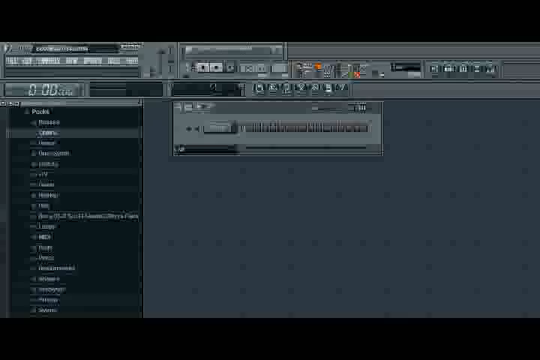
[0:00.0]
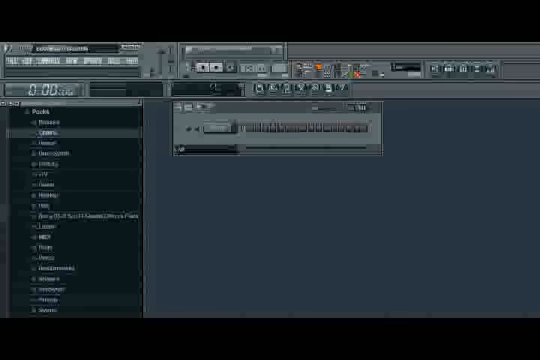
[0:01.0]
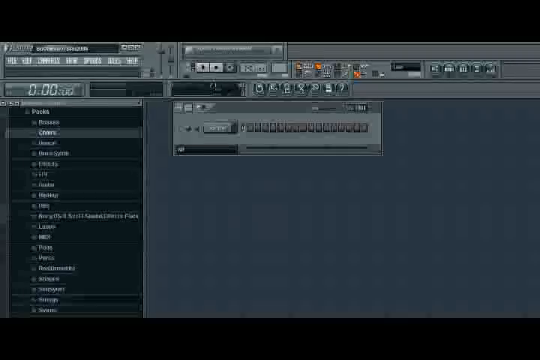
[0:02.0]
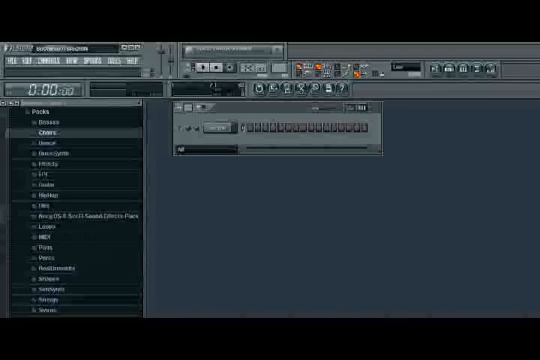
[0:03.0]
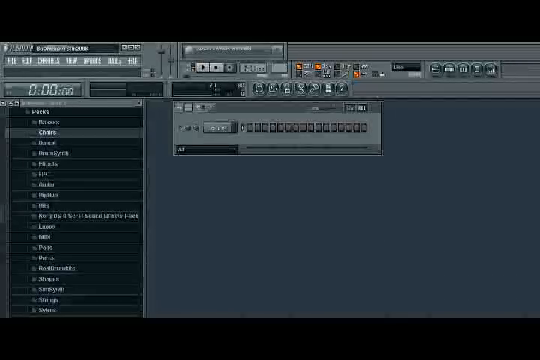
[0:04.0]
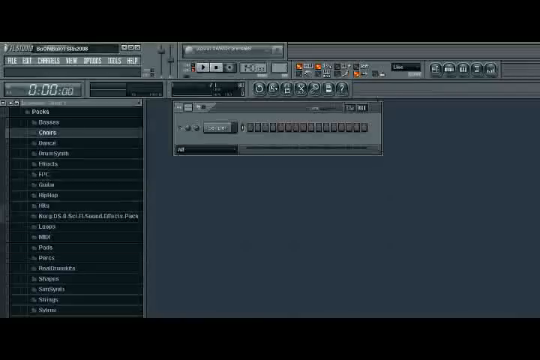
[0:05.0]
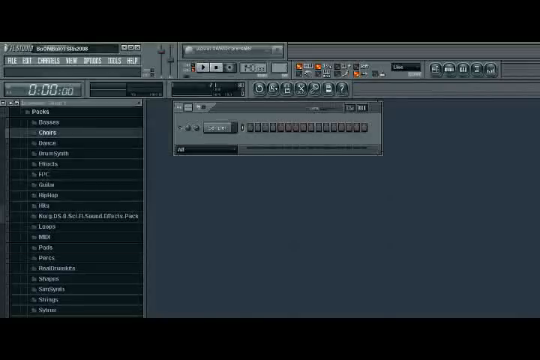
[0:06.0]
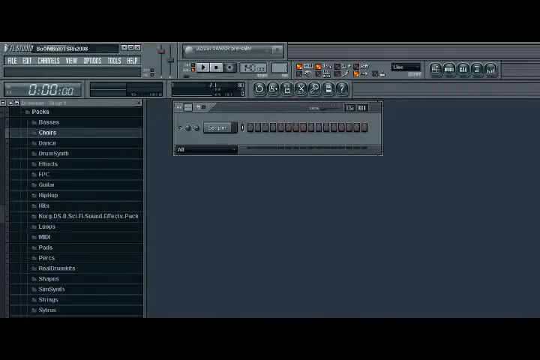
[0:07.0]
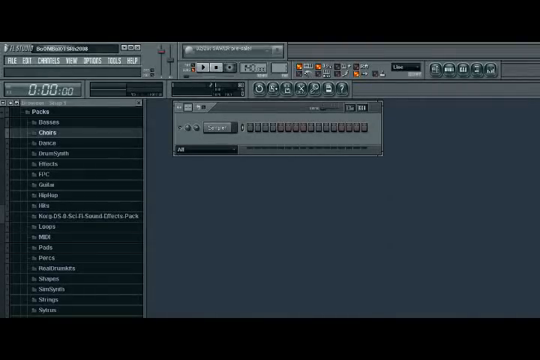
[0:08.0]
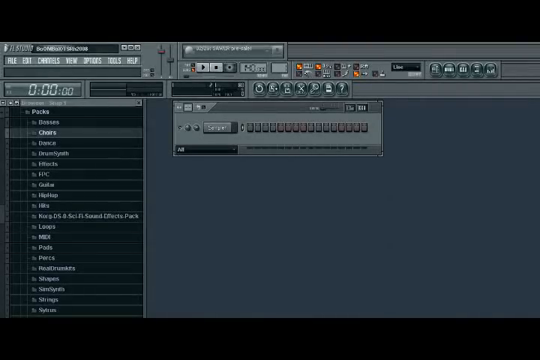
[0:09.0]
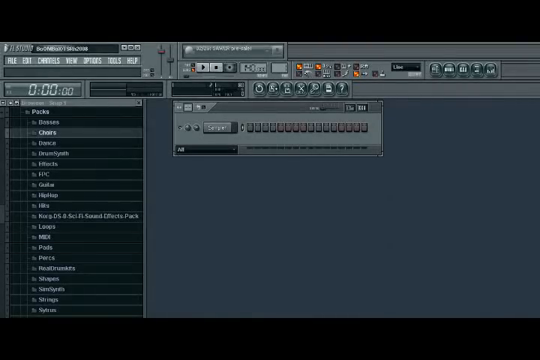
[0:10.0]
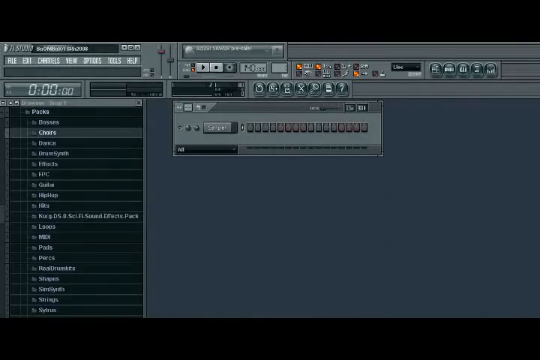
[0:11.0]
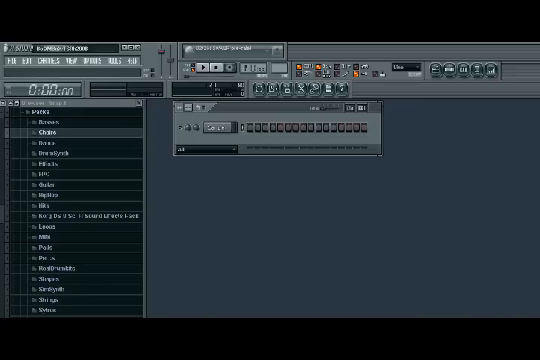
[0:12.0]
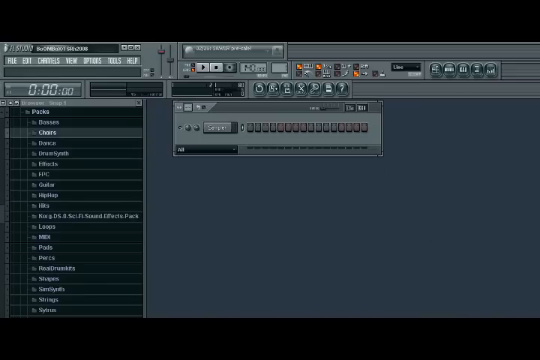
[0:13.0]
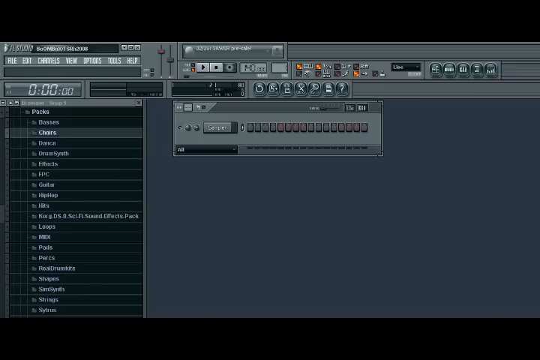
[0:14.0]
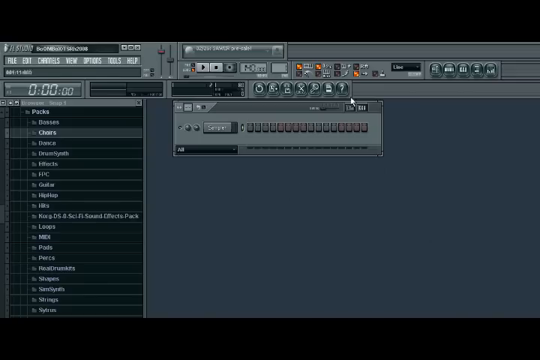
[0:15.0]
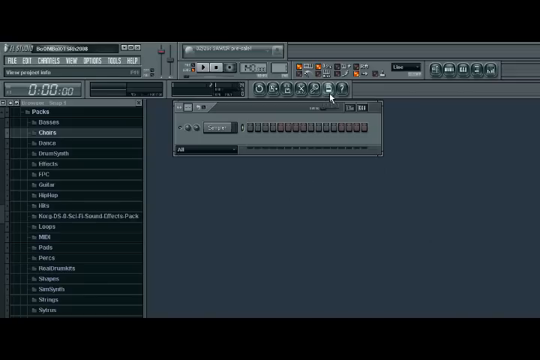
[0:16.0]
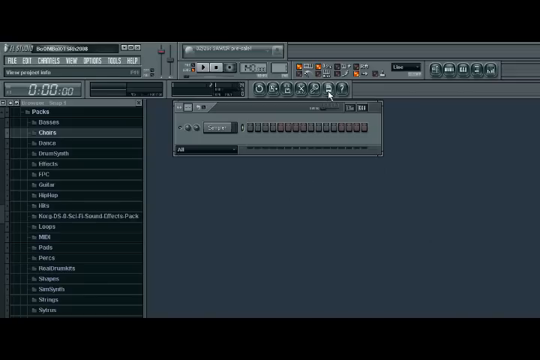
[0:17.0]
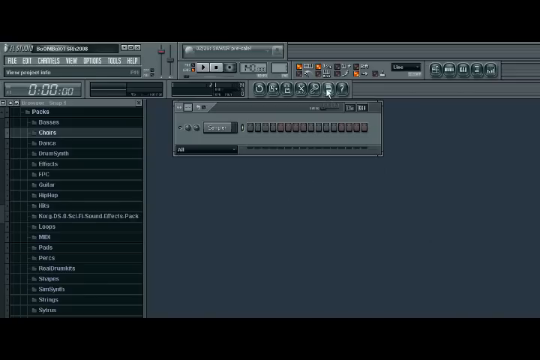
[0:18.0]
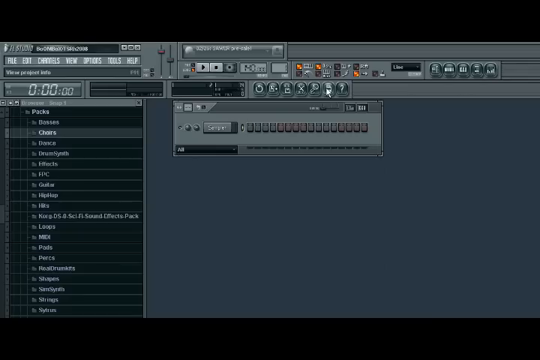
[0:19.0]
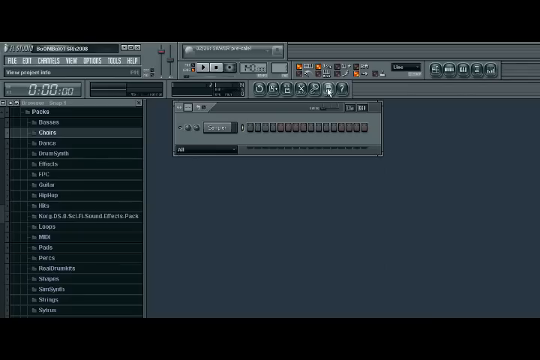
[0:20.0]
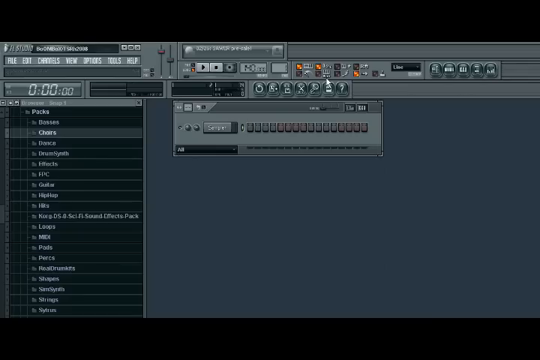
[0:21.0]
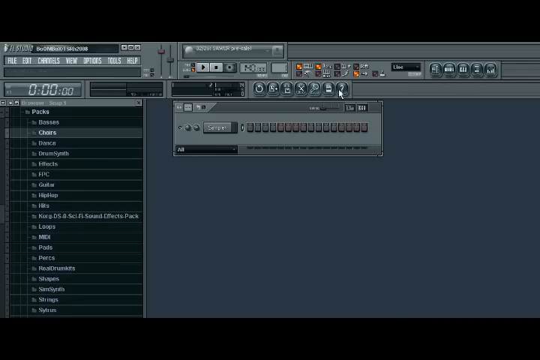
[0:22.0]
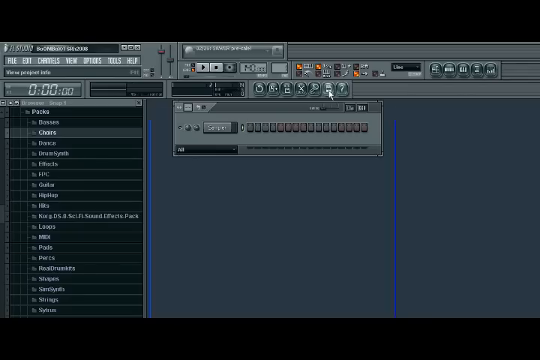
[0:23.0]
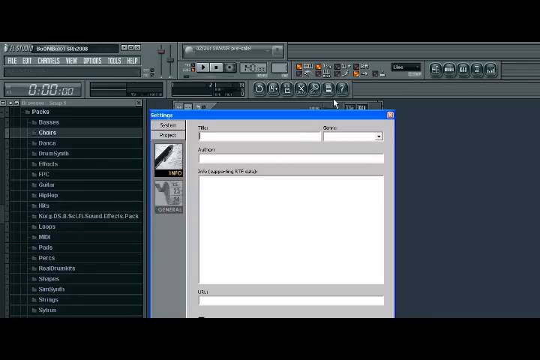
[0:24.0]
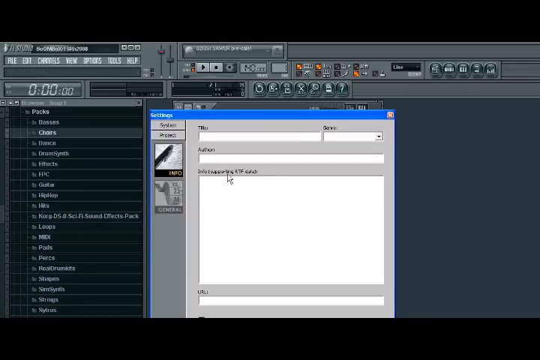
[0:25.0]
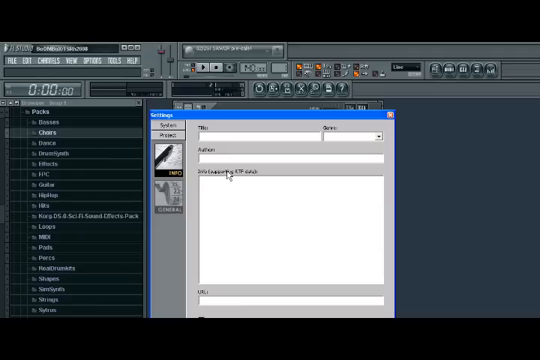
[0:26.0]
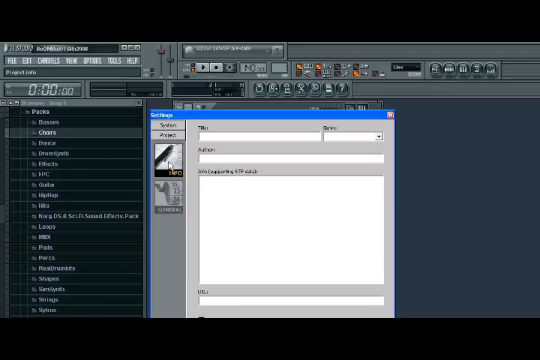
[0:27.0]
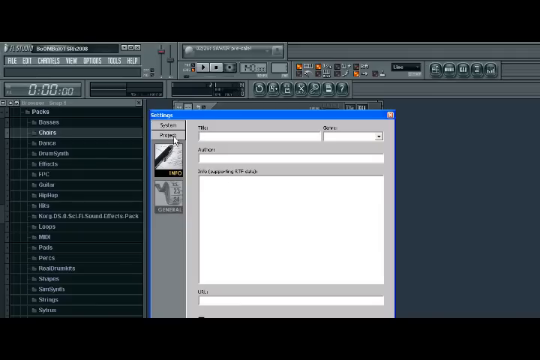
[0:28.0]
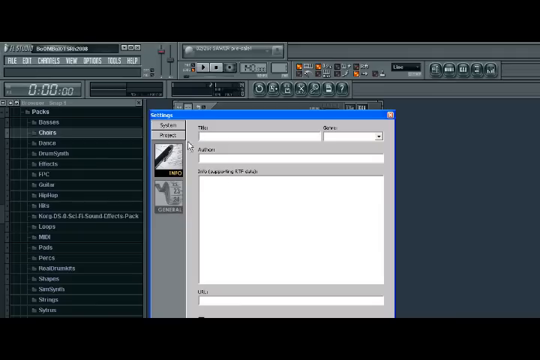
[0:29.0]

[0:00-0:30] The video opens on the FL Studio home screen, in what seems to be a very old version of the app. Someone navigates to what appears to be the home screen, then clicks into one of the settings, which opens the settings for FL Studio along with a title, a genre, and a sort of white background page with several text input sections. There are no people or animals, and there are no screen transitions; the only activity is clicking within the app and opening a screen inside the FL Studio application.